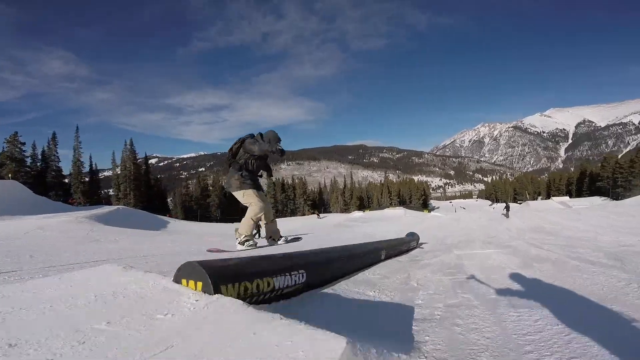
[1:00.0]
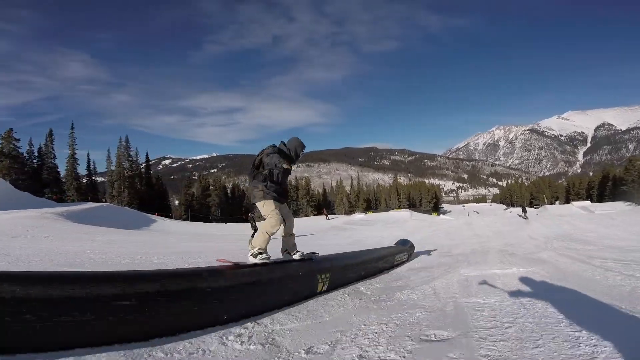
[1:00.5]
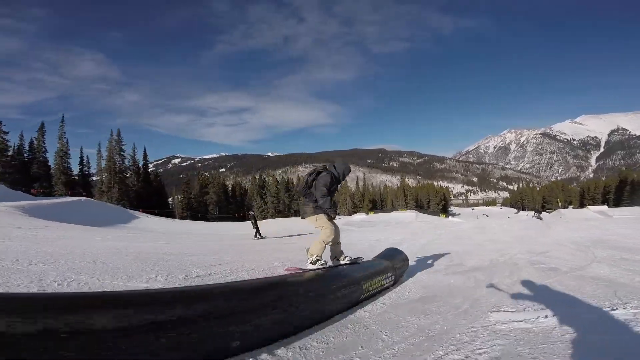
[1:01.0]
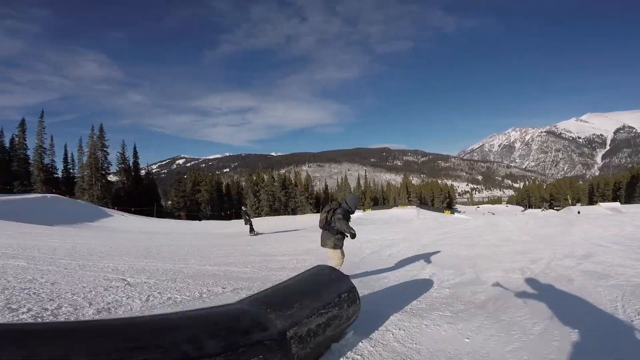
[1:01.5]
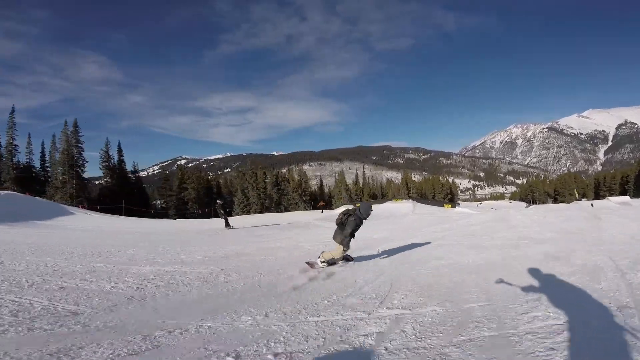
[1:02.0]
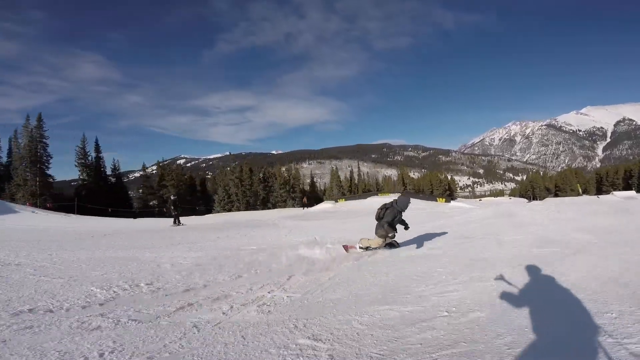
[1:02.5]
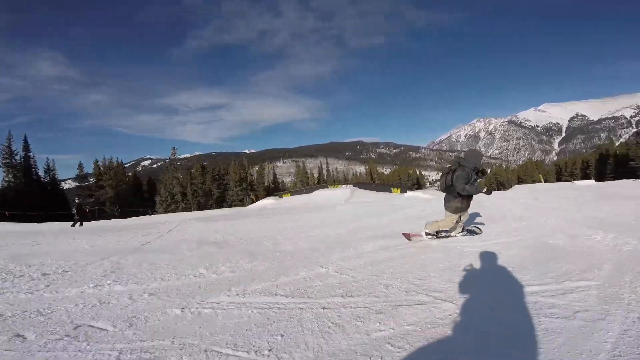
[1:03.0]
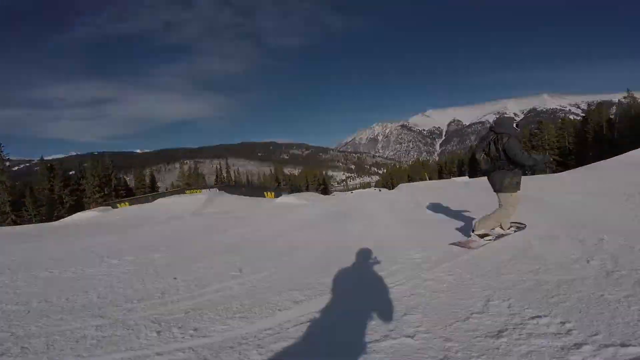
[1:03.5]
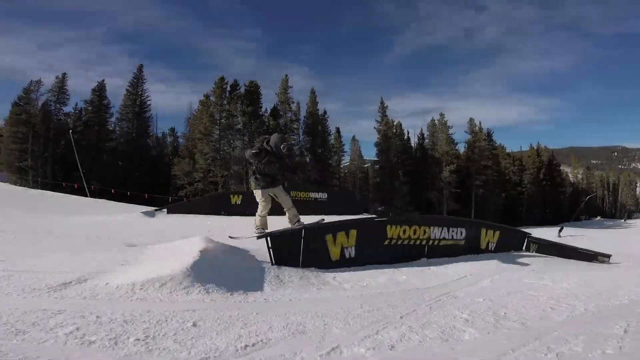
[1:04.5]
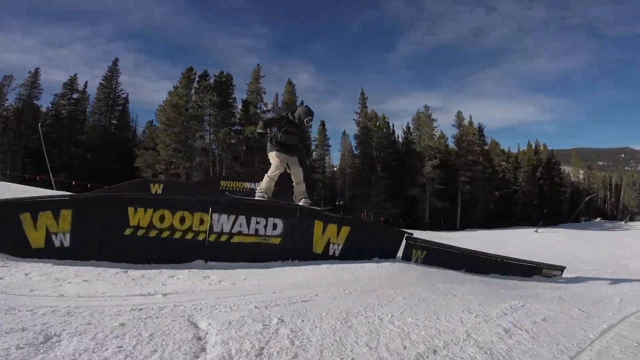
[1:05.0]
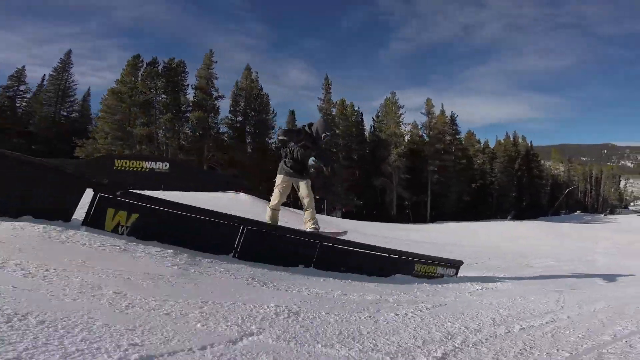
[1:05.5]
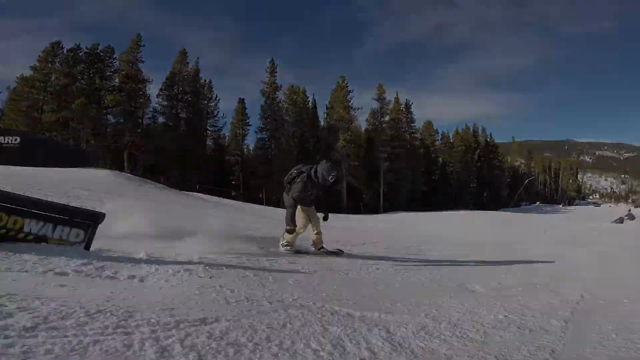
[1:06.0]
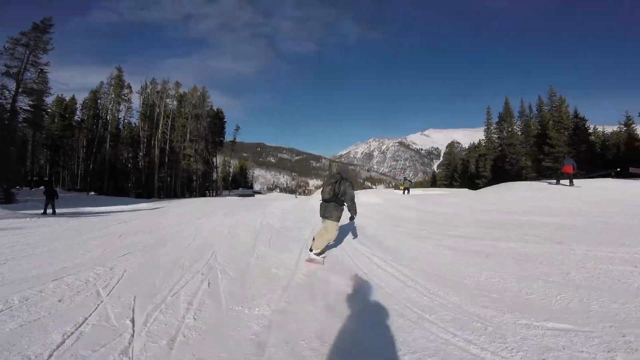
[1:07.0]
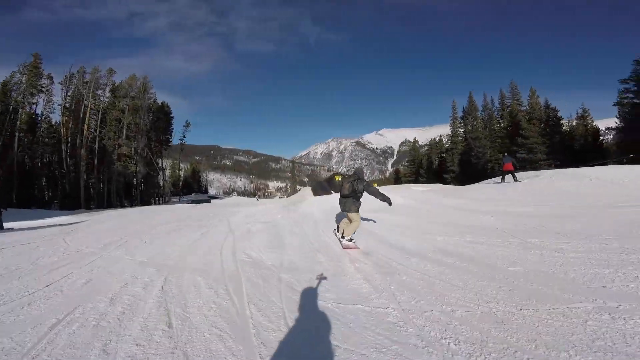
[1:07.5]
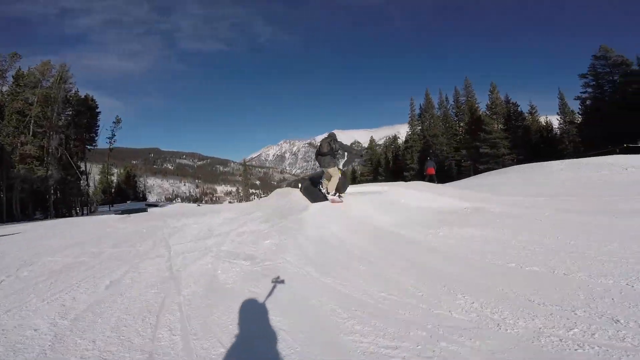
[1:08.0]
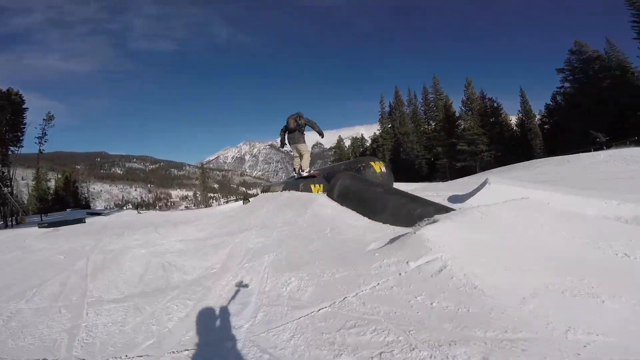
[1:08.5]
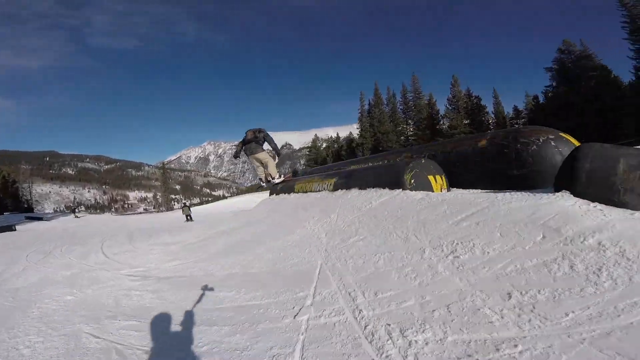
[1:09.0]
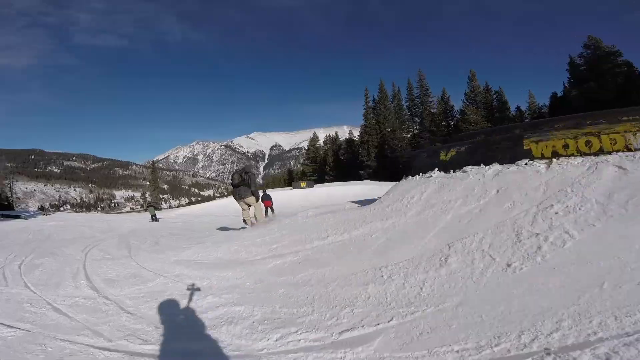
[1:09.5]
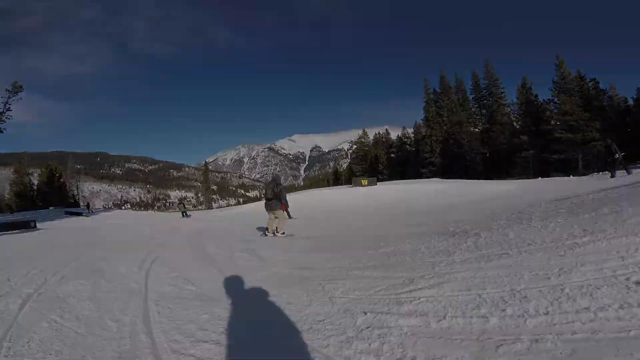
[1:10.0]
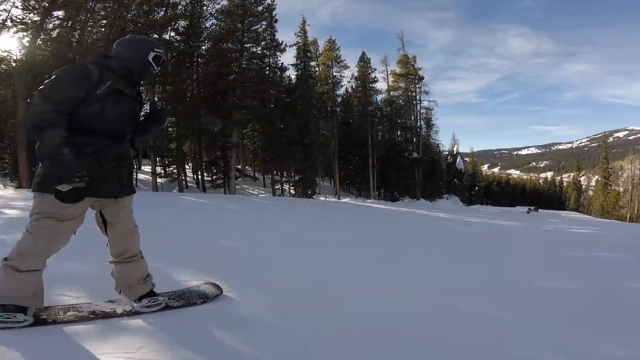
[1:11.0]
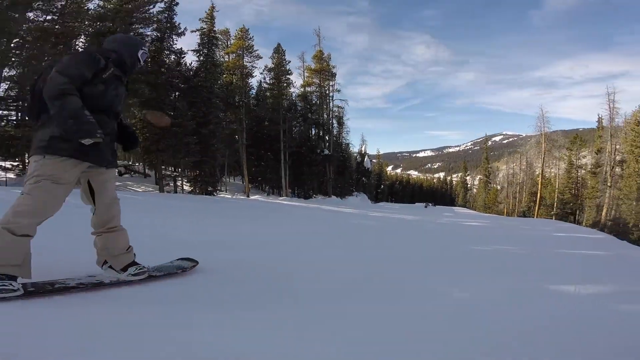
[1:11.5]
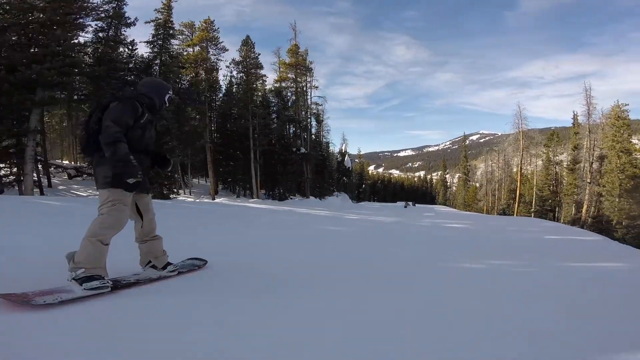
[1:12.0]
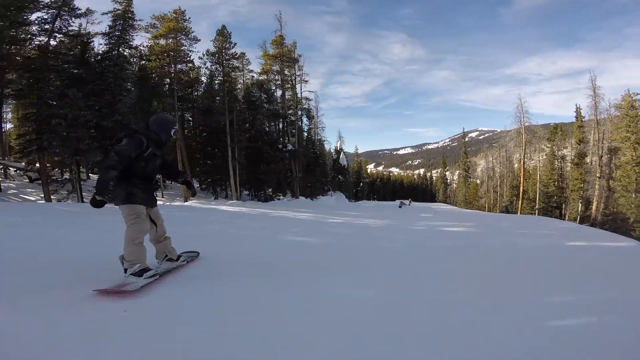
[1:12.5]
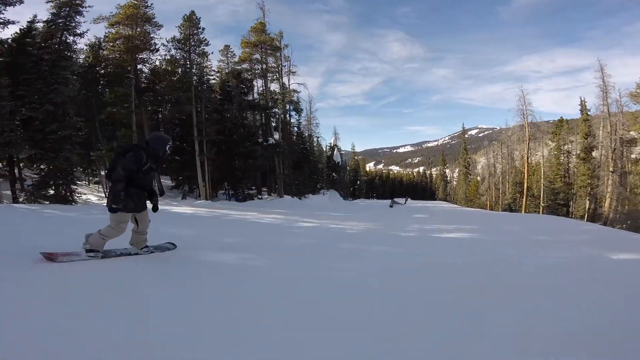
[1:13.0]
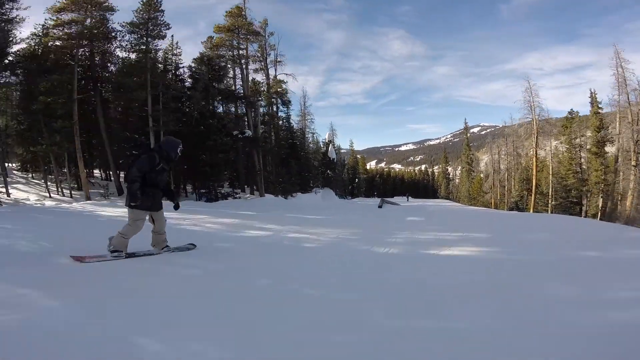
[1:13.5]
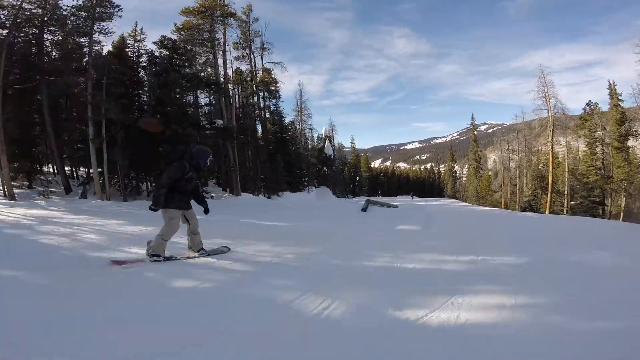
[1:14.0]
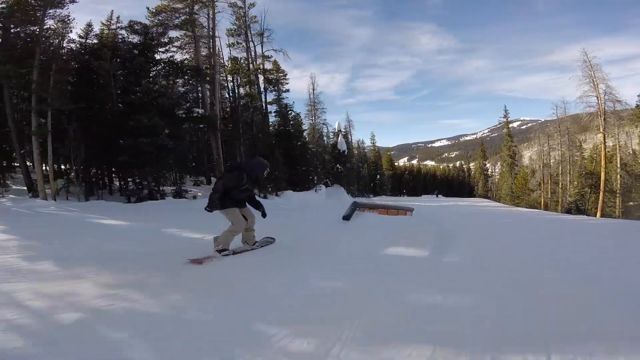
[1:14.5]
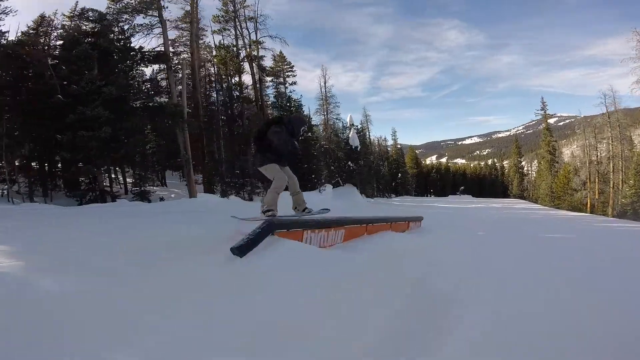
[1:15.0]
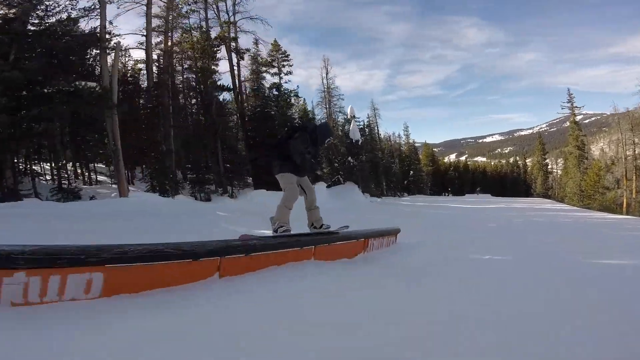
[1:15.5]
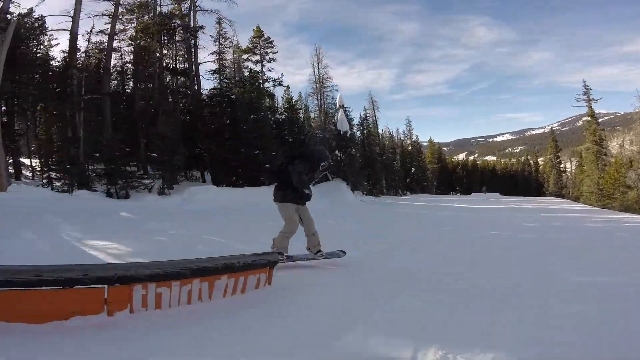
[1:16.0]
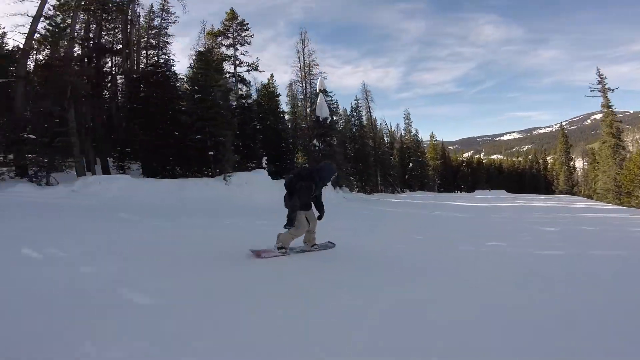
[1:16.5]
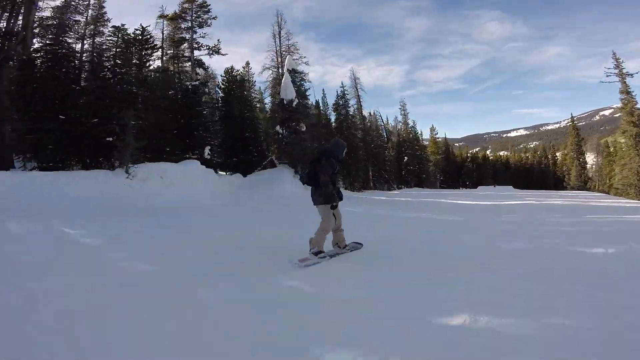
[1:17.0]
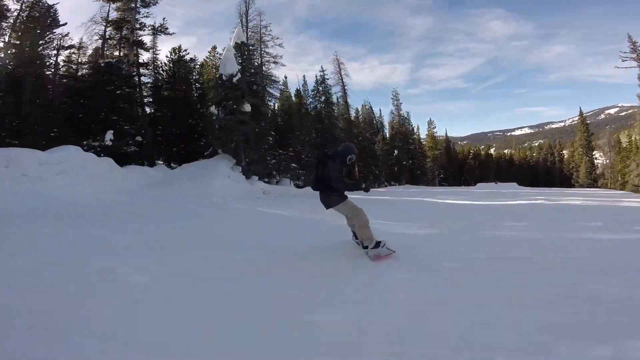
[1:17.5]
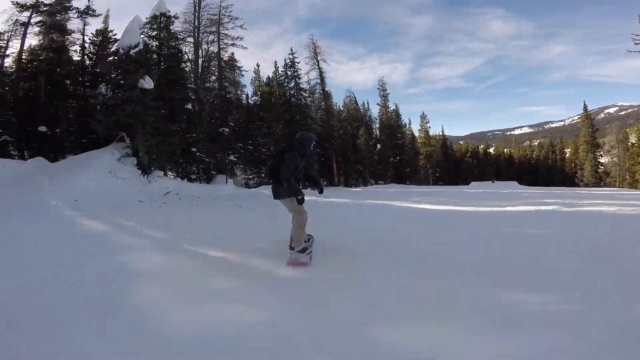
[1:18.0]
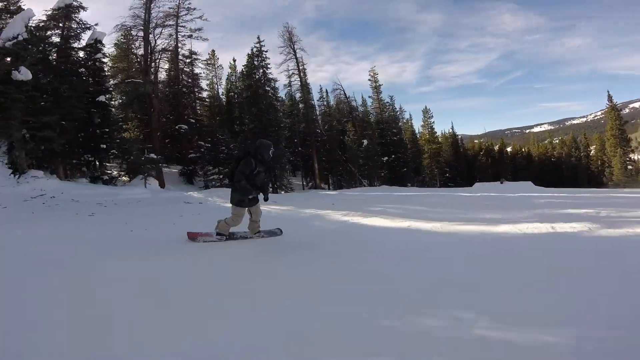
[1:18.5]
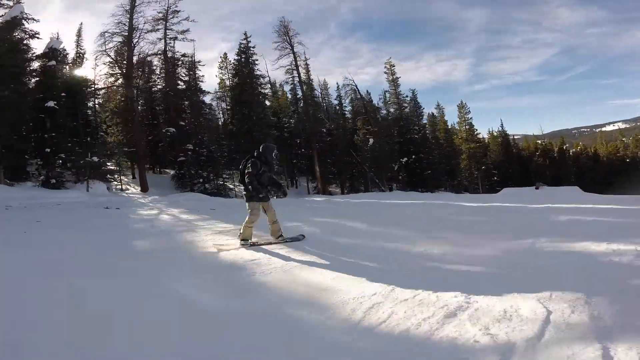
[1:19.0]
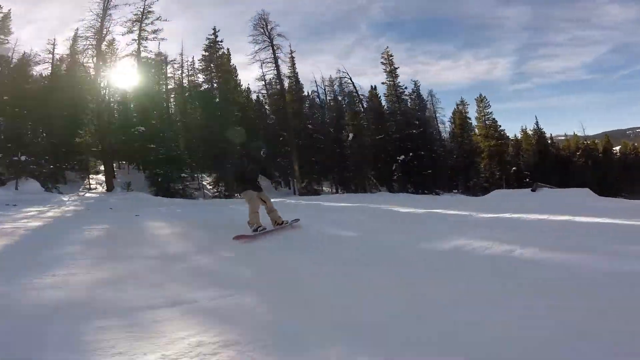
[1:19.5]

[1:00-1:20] A snowboarder glides across a big black pipe with "Woodward" on the front of it. He comes off the end on the left side, runs on the snow, and continues toward the right. The screen goes black, and then he is shown coming up on another structure on the snow: a piece of wood painted black with "Woodward" on it. He goes over it and lands on the snow. In another shot he comes up to a ramp with another black ramp on top of it, slides across the top, comes down the other end, and comes near some snowboarders on the other side. Tall evergreen trees are on both sides, and in the distance are mountains partially covered with snow. The sky is mostly blue, with some very thin, scattered clouds here and there.